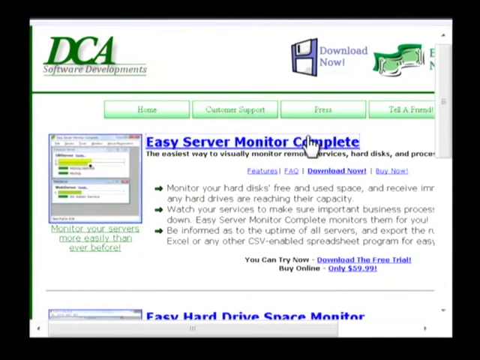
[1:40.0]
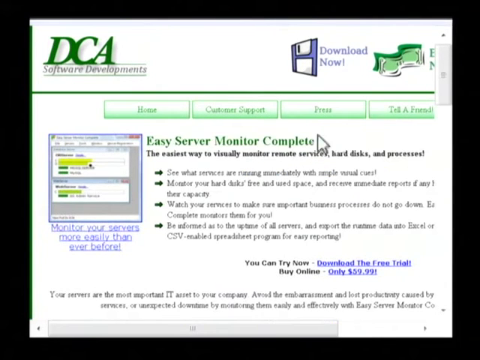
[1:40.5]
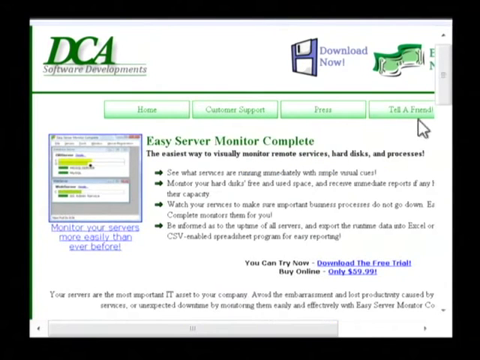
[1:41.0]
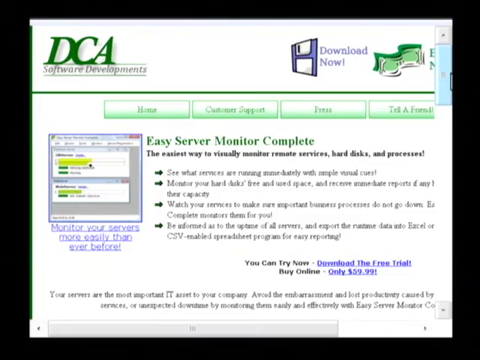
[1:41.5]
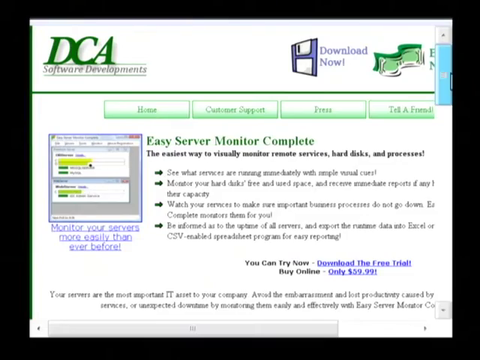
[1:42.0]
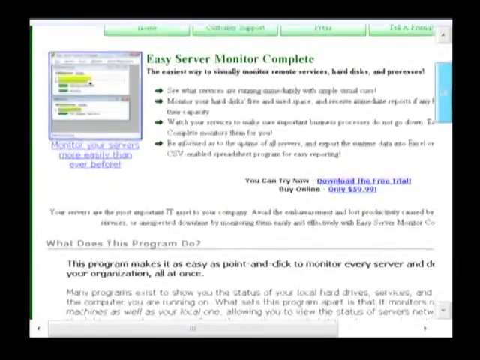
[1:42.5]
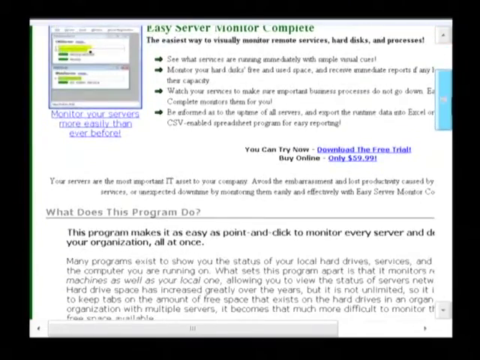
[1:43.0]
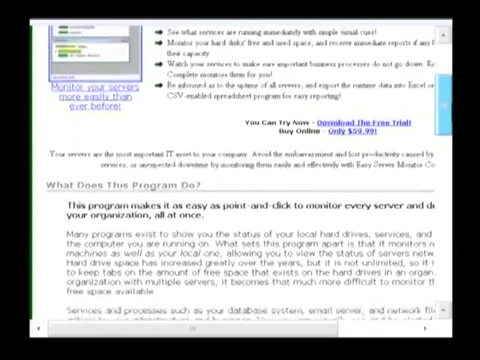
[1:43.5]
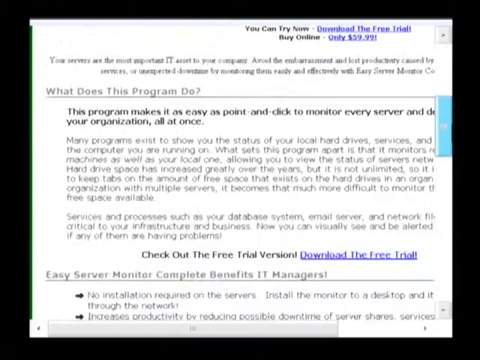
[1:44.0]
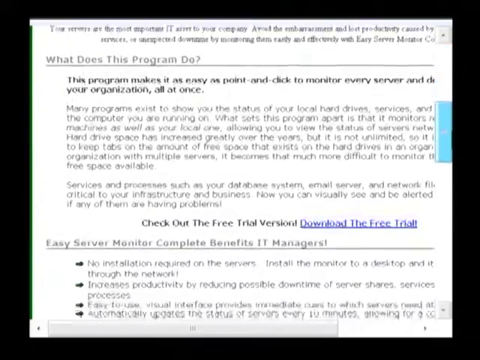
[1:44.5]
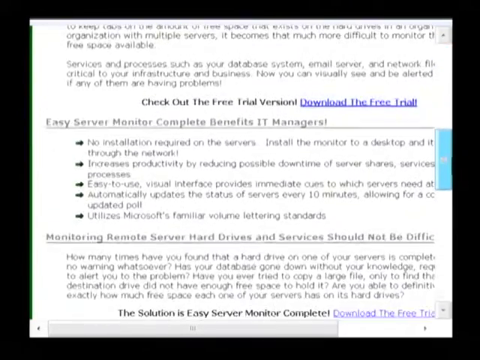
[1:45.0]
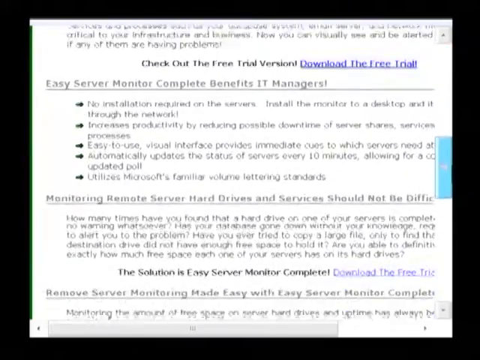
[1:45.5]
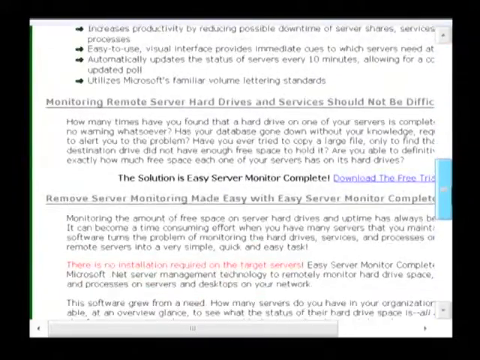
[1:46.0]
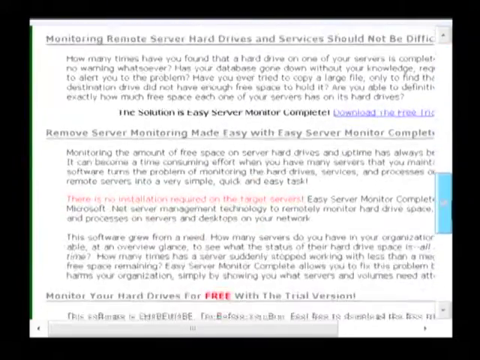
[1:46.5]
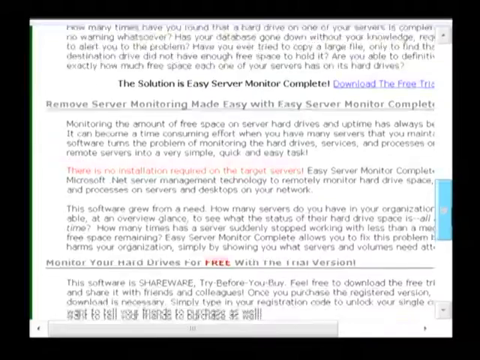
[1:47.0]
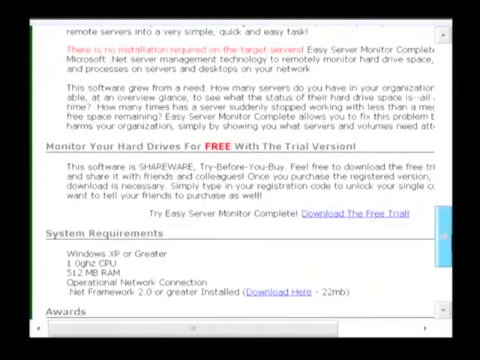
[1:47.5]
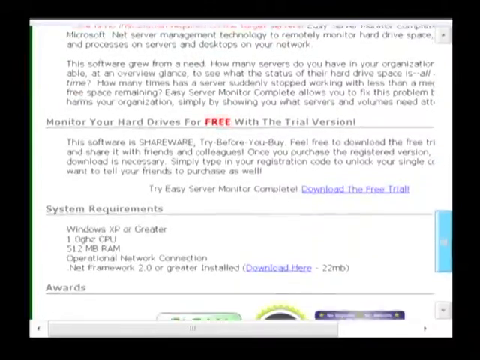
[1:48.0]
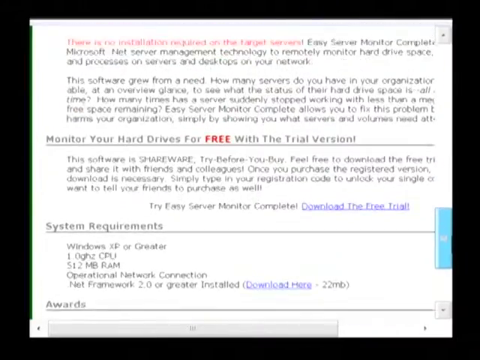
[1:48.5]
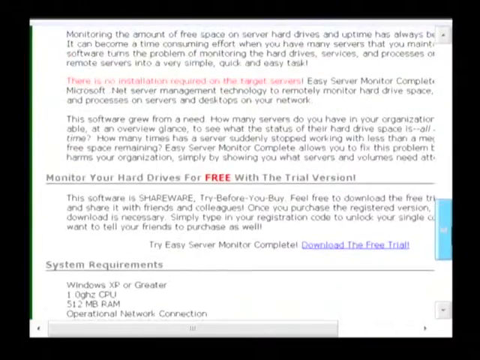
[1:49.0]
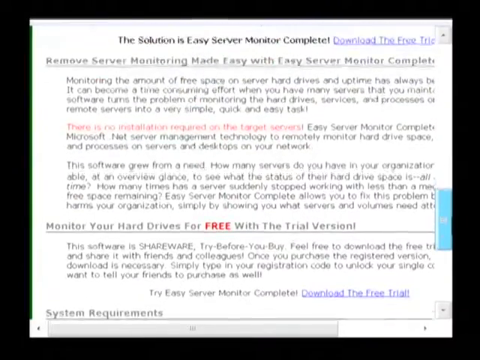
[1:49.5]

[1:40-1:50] The page shows "DCA" in green writing at the top left, with "software development" in grey underneath. The cursor is on the "easy server monitor complete" section, and he hovers the mouse over it. He clicks the "easy server monitor complete" tab, which turns the writing green and makes the underline disappear. He moves the mouse to the right-hand side, presses the mouse and scrolls down the page, which highlights the bar in blue, going all the way to the bottom and then back to the top, which takes him back to the page that says "Easy Server Monitor Complete".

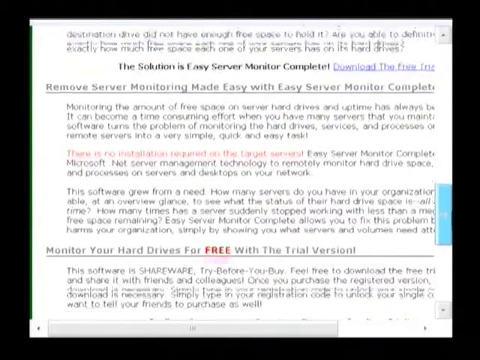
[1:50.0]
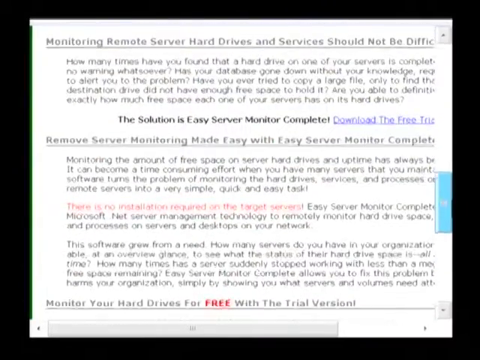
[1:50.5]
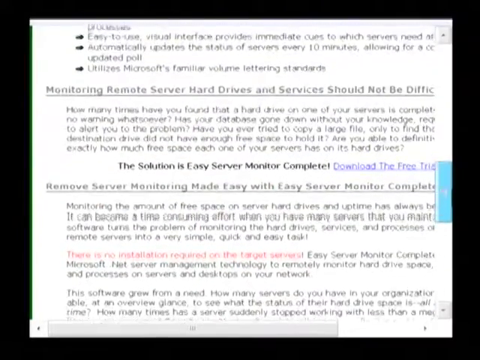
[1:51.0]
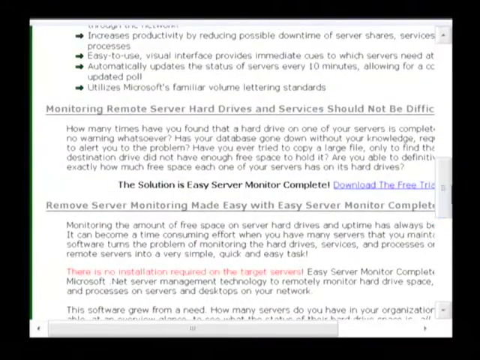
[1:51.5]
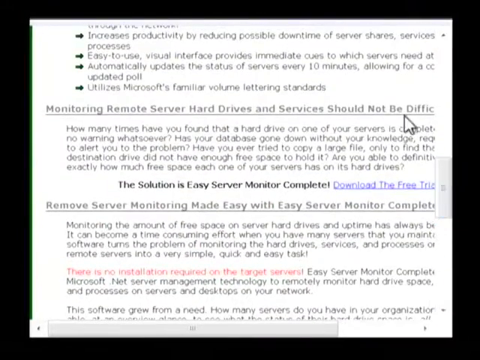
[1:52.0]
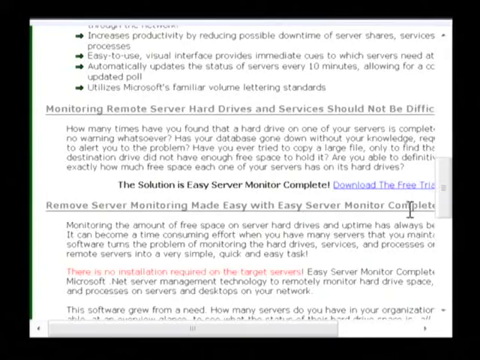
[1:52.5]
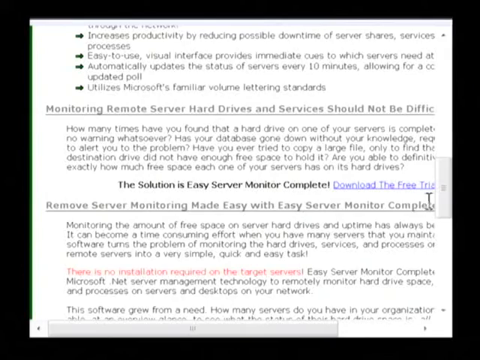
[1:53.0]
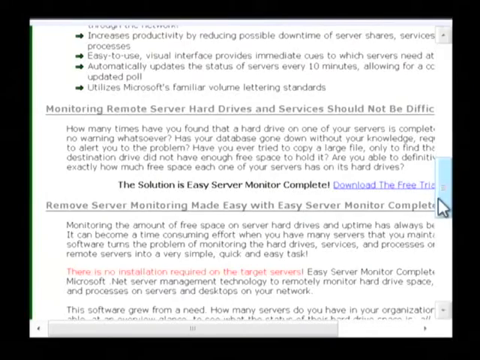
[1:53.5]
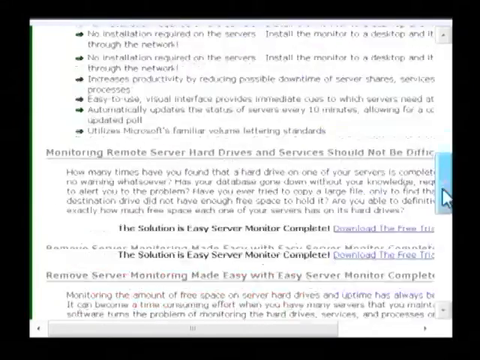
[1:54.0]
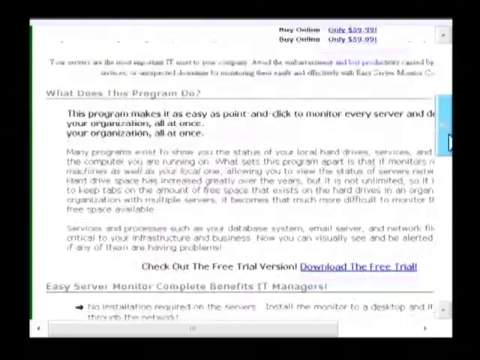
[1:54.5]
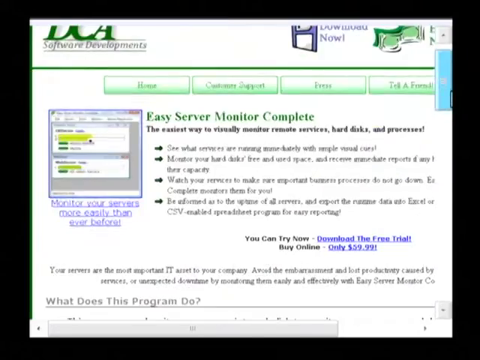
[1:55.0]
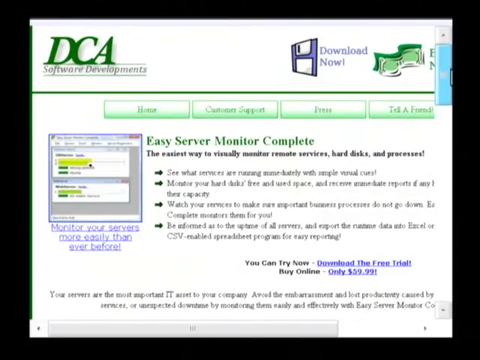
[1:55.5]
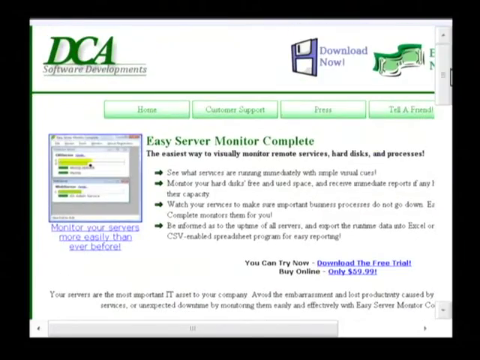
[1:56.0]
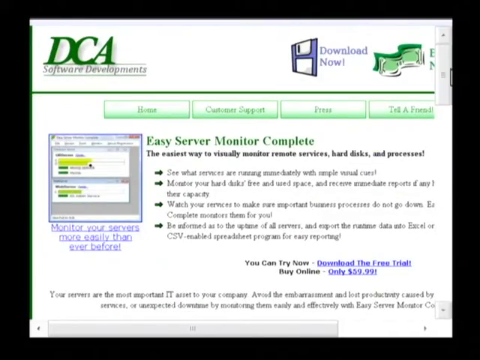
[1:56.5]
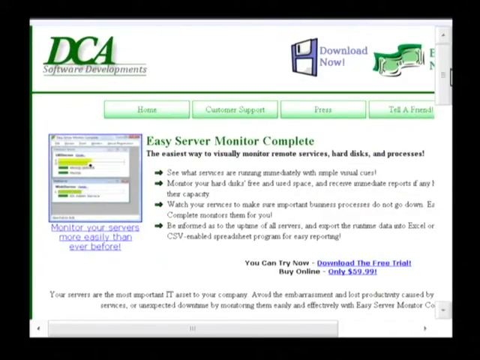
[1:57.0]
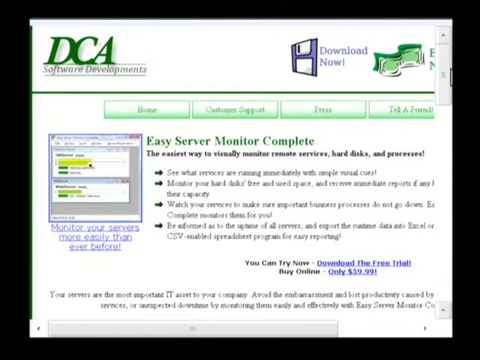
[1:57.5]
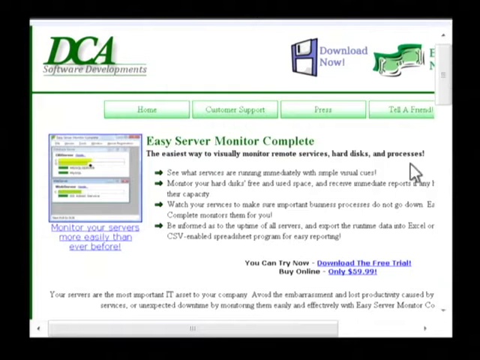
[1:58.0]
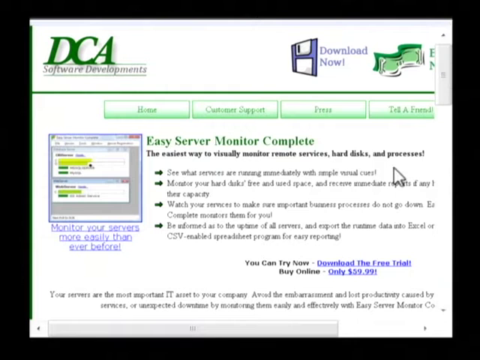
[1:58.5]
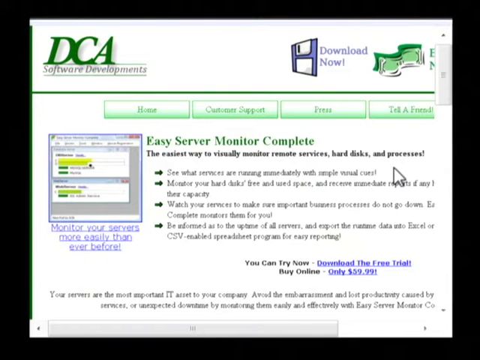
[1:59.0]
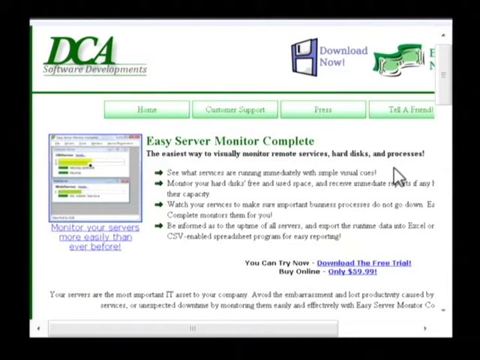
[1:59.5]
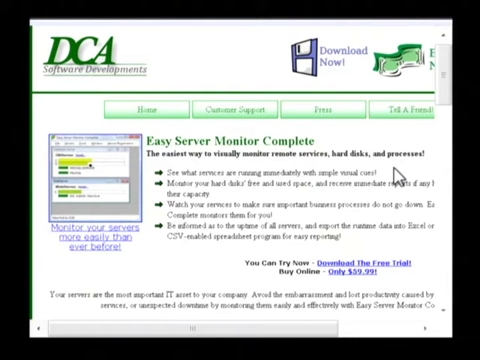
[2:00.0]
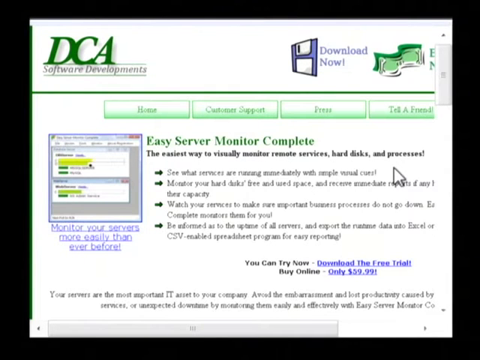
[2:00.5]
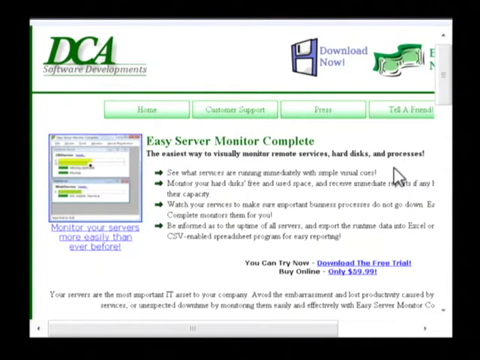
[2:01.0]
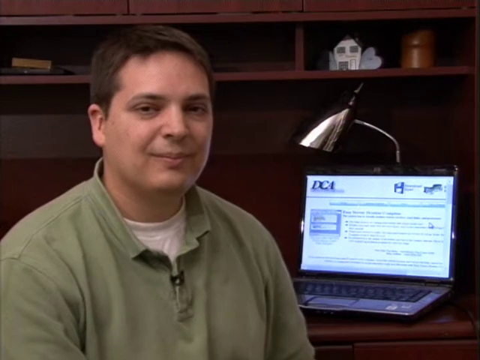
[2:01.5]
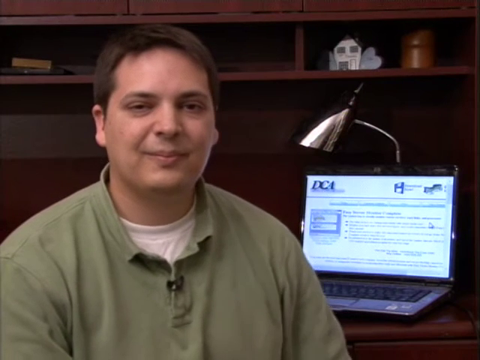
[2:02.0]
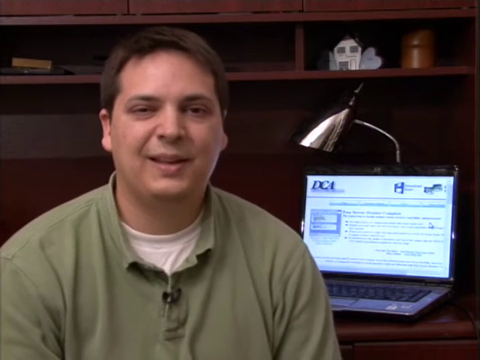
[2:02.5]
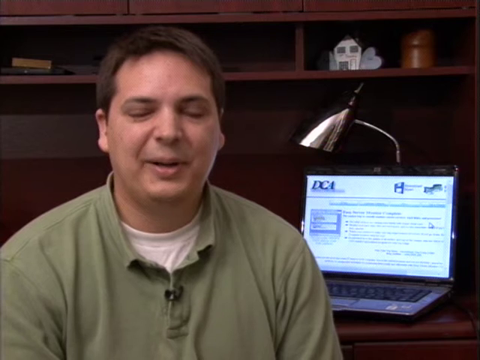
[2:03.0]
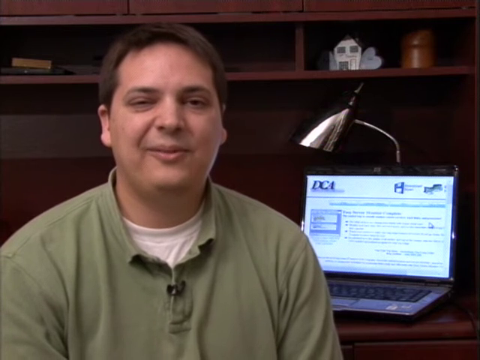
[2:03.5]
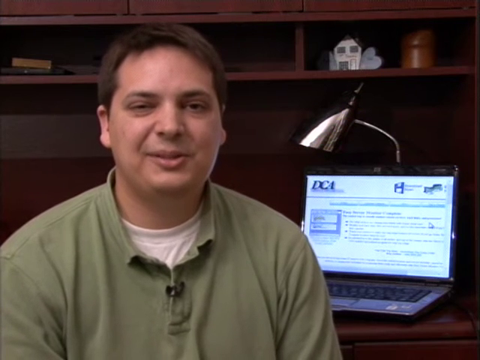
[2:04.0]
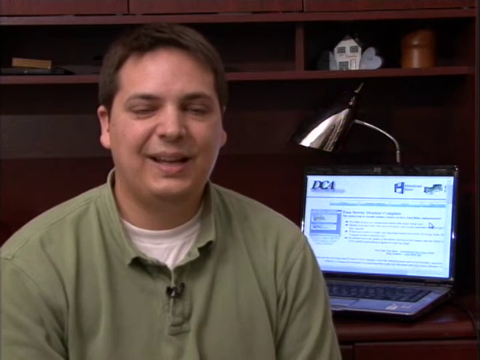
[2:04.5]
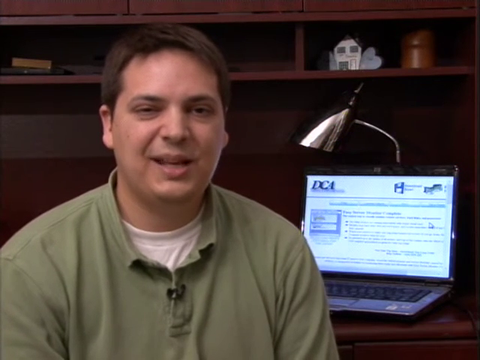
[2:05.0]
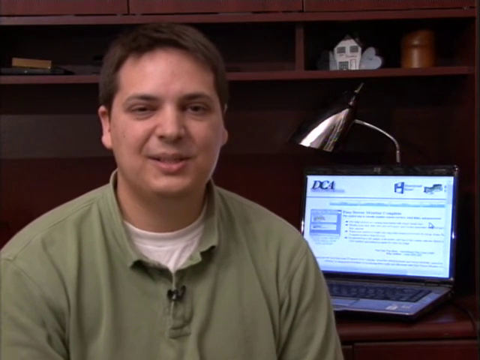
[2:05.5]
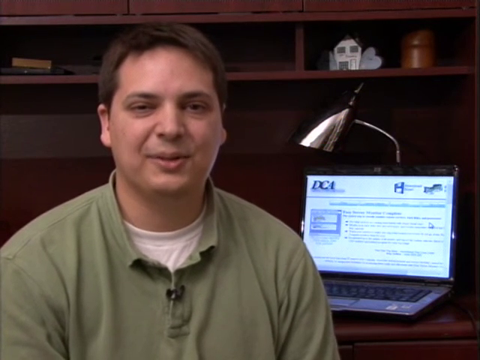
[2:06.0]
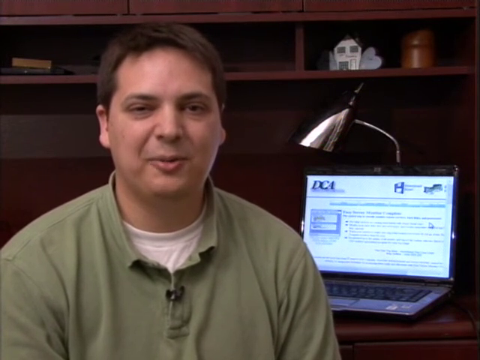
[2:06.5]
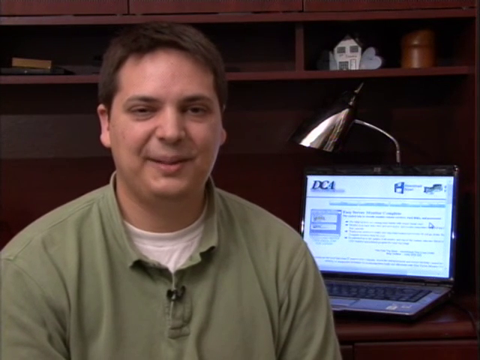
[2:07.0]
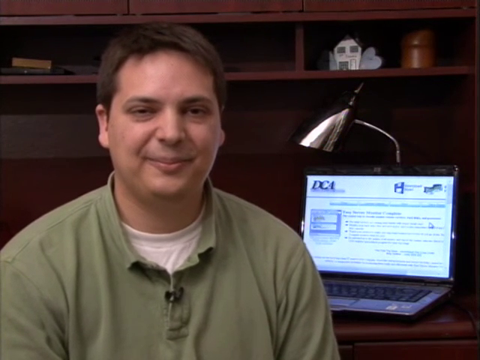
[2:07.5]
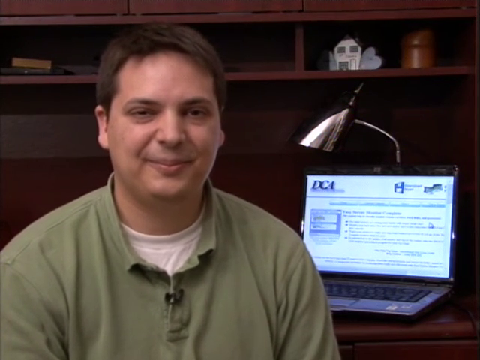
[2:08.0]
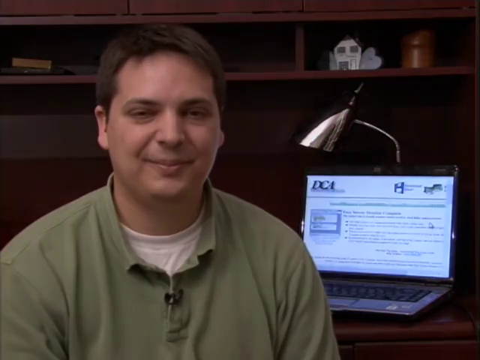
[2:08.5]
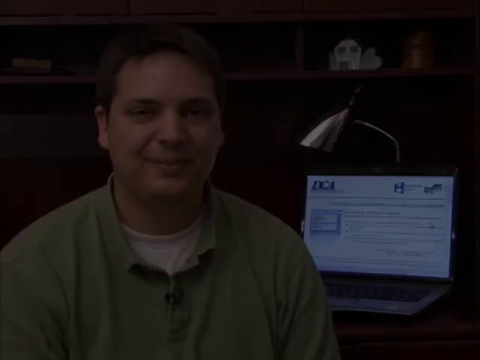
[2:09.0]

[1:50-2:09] A page with a white background has lots of writing. In the centre, under lines, is the word "free" in red capital letters. On the right-hand side, a scroll bar is highlighted in blue. He has clicked the bar with his mouse and slides the mouse up so the bar moves up. He hovers the mouse over some words, then goes back to the bar, which highlights in blue, clicks and drags up to the top of the bar. He lets go of the mouse button, the blue highlight stops and the bar changes to white, and he hovers the mouse back over the writing. The screen then flicks over to the man, who faces the camera and starts talking to it. He wears a green polo shirt and a white t-shirt, is smiling, and has brown hair. In the background on the right-hand side is his laptop showing the screen he has just been scrolling through, with a lamp over the top of the laptop.